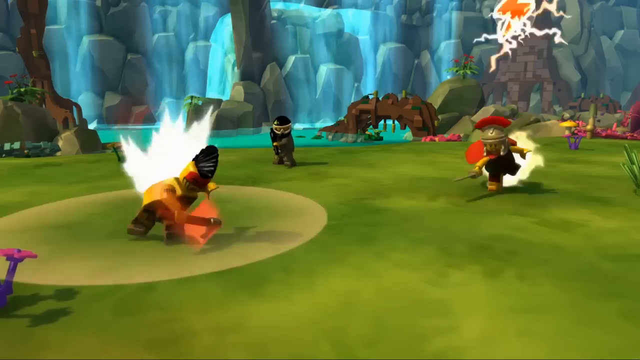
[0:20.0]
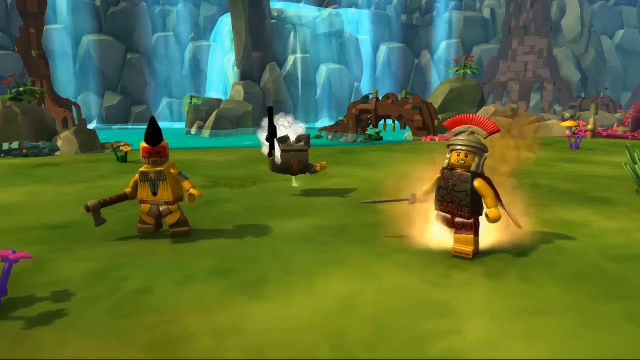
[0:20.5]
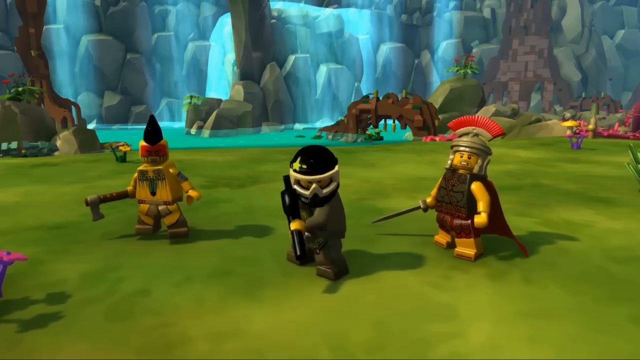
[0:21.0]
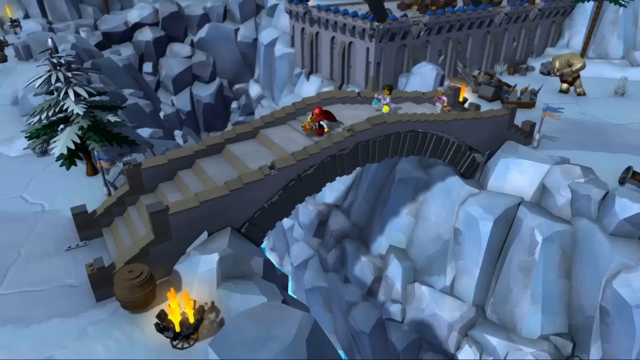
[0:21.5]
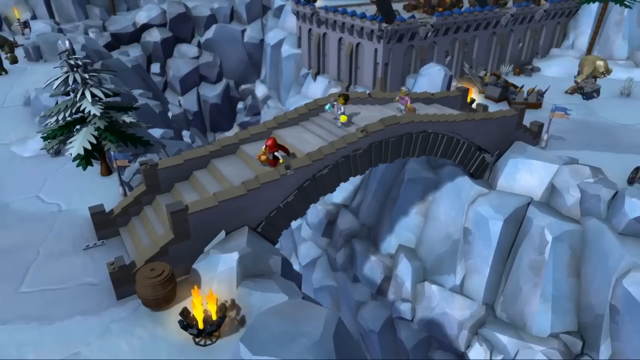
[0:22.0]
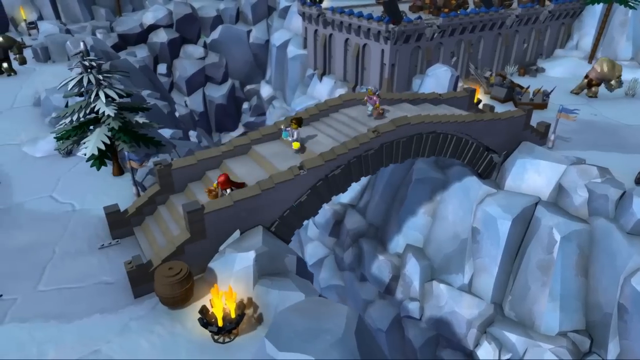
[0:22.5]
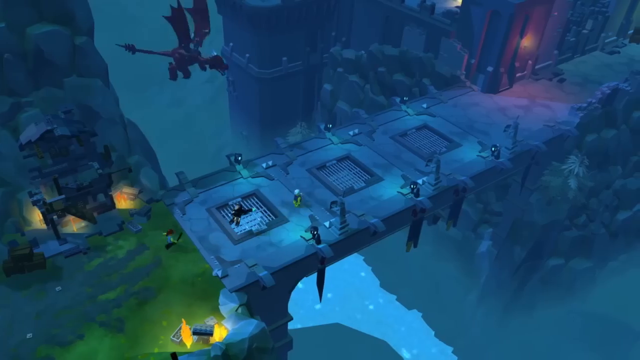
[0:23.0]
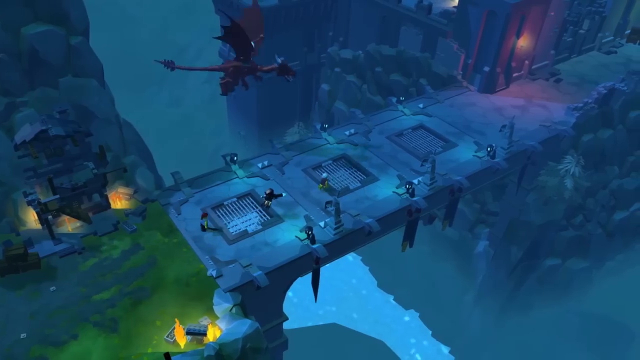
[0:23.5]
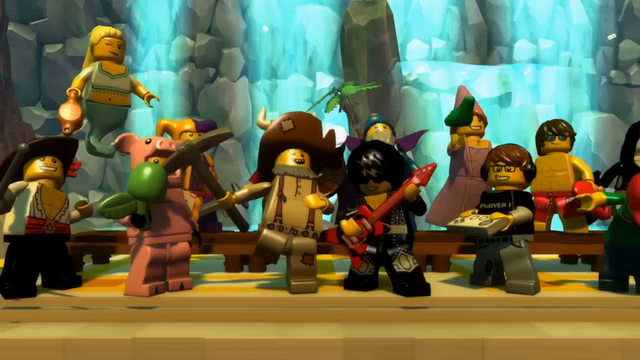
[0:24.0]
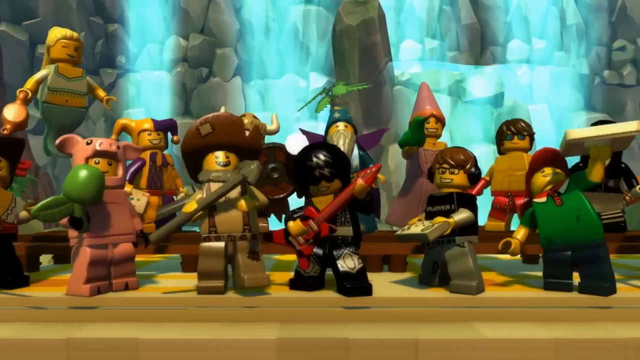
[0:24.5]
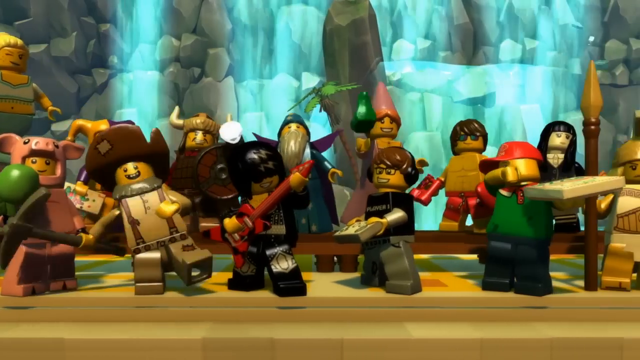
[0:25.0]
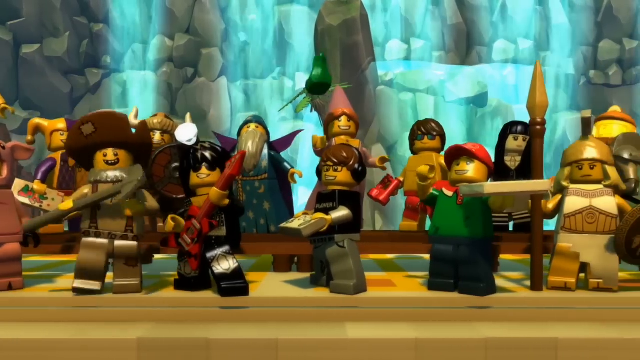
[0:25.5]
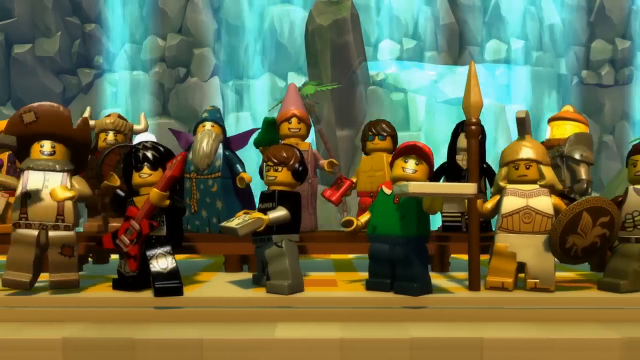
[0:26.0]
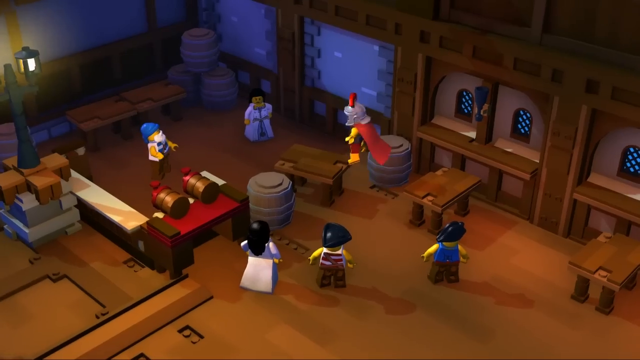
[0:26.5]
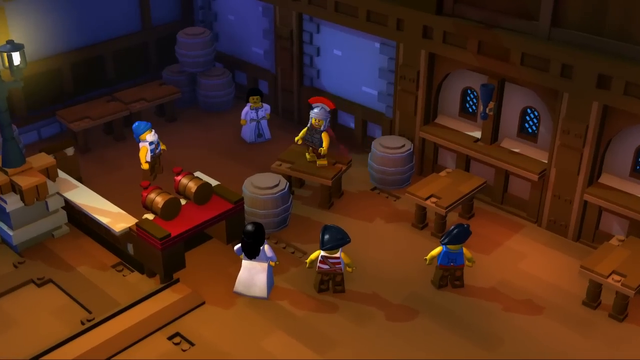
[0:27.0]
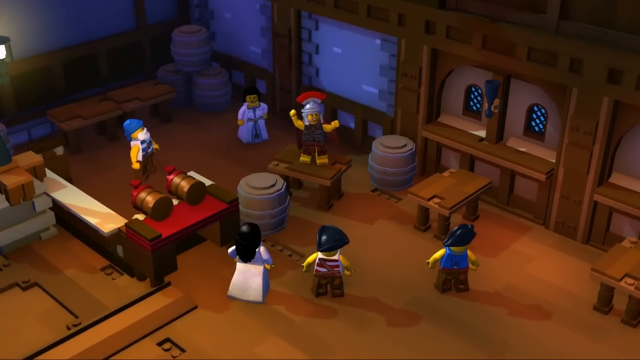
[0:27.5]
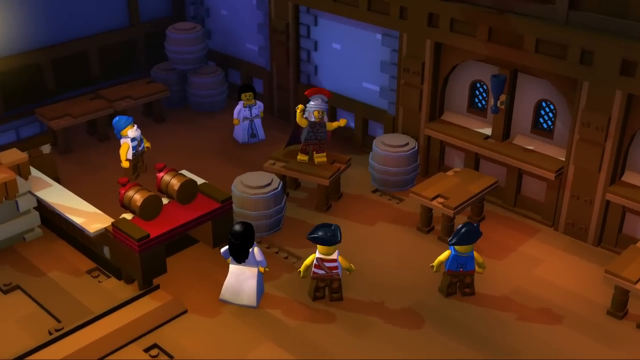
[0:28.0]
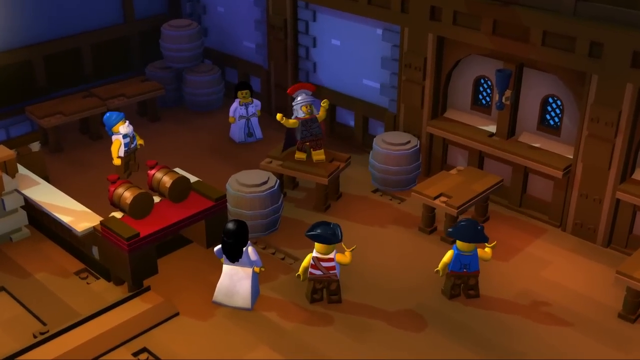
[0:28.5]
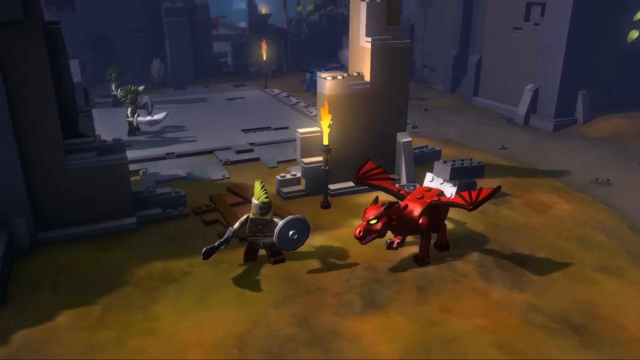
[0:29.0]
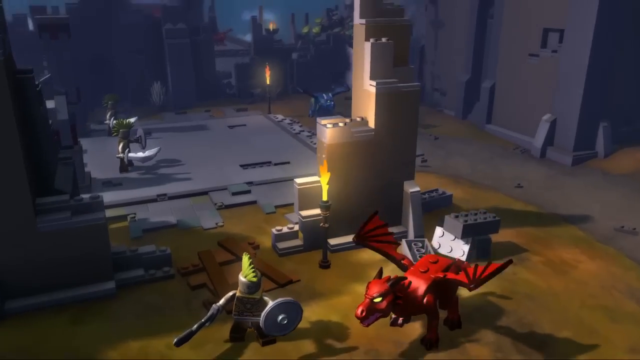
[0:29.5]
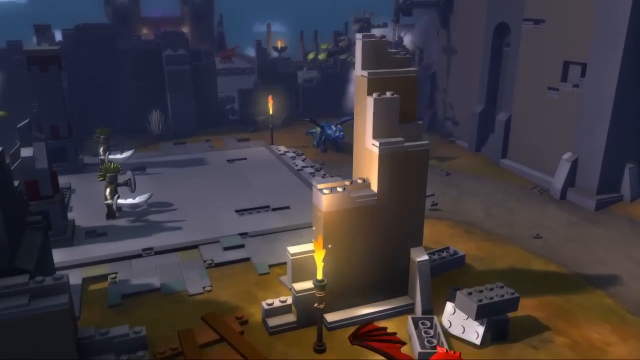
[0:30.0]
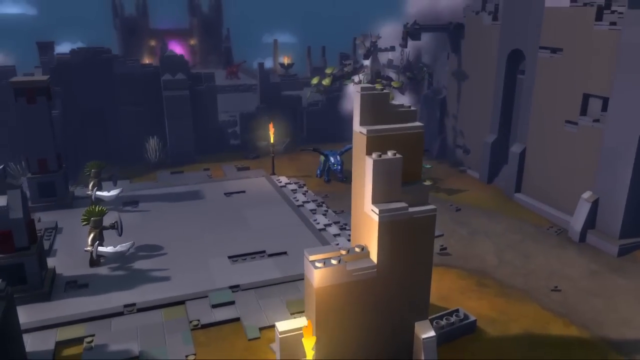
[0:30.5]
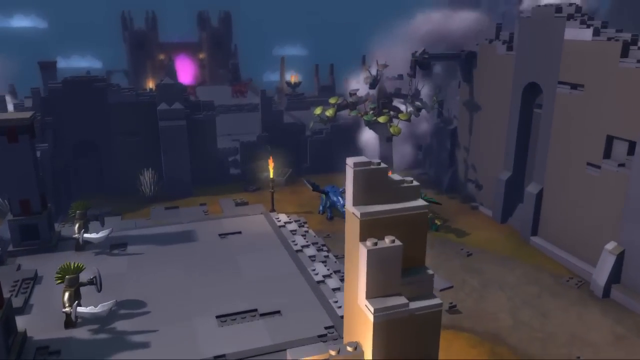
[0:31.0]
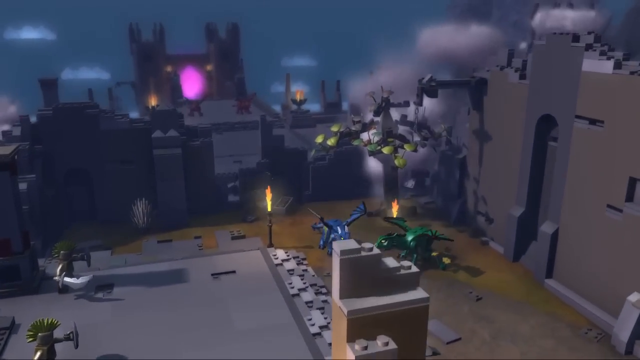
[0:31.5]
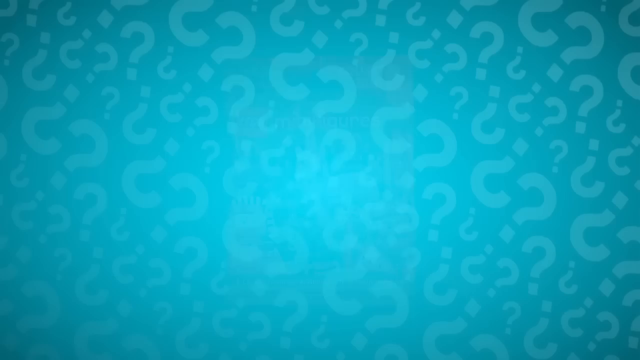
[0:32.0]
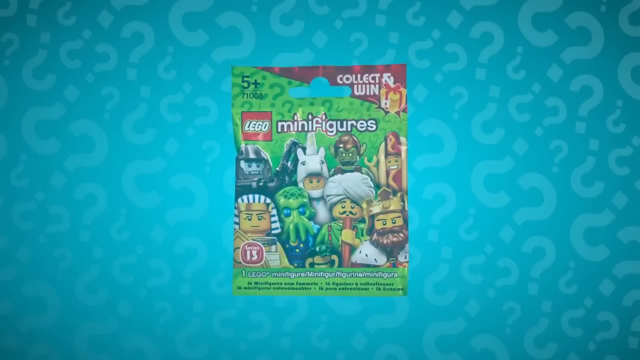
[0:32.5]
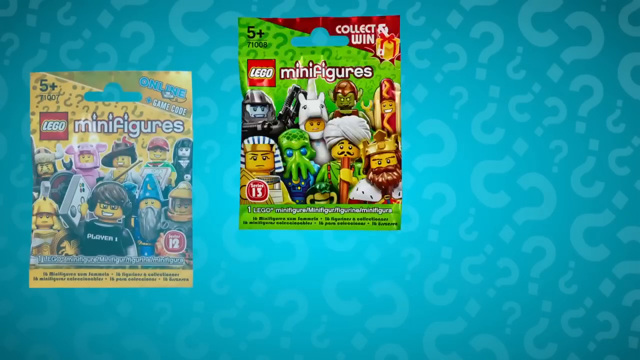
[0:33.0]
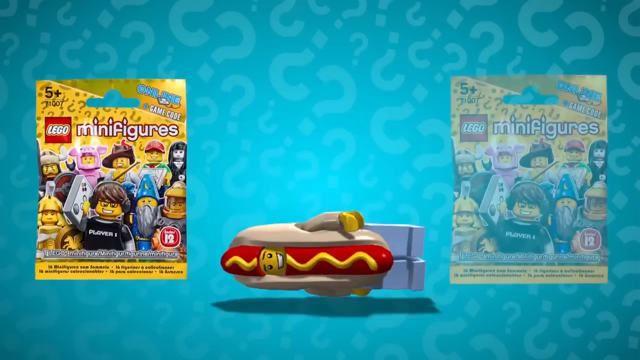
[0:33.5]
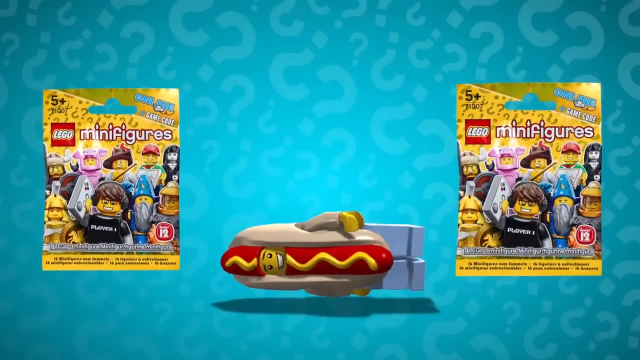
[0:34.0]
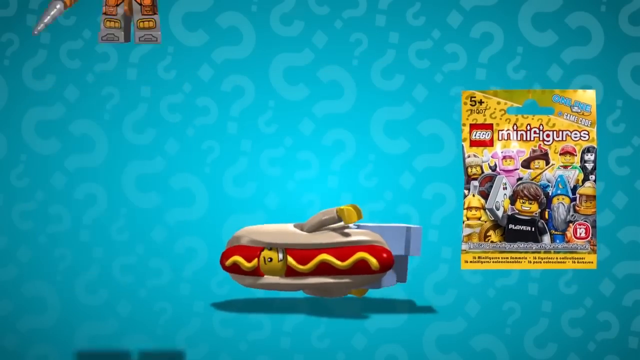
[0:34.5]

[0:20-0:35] A closer shot shows characters running through a green field with some water in the background. One character looks like he may be Native American, with a large mohawk, and another is more of a gladiator type; they run with weapons. The setting switches to a snowy mountain range, completely white except for a brown bridge spanning two mountains and some fire, with lots of LEGO characters running down the bridge. Next is a fantasy, dungeon-like place, very blue and gray, with a dragon and more characters running. Rapidly, another shot shows lots of characters in front of a waterfall: a princess, the original guy with the gaming console from the intro, a pizza delivery man, a rock star, a cowboy, a pig, a wizard, a viking and a goth, all LEGO characters in different costumes with yellow skin. Another shot of a group of characters follows, where one seems to be giving a speech in a pub or tavern. Then comes another dungeon-like scene with a few small dragons and some smoke. The turquoise screen with question marks returns, and the hot dog LEGO man drops down between images of minifigures that look like real photographs of real-life products in a yellow package.